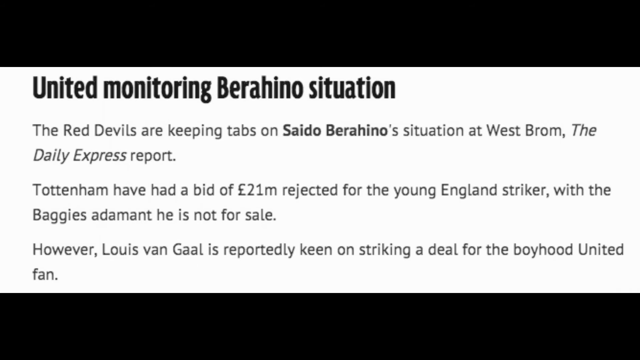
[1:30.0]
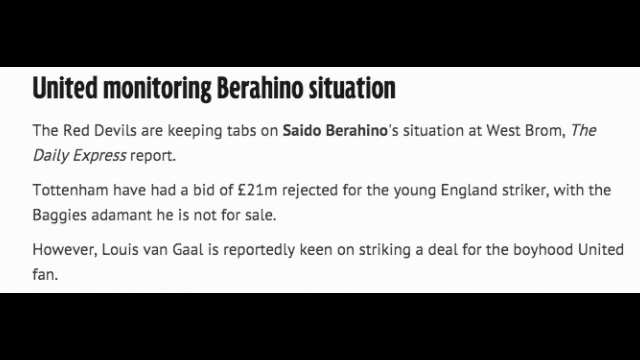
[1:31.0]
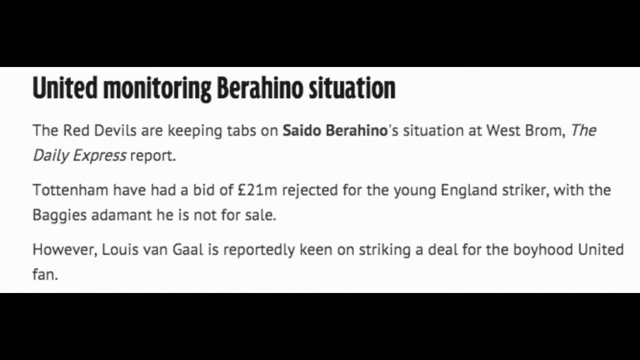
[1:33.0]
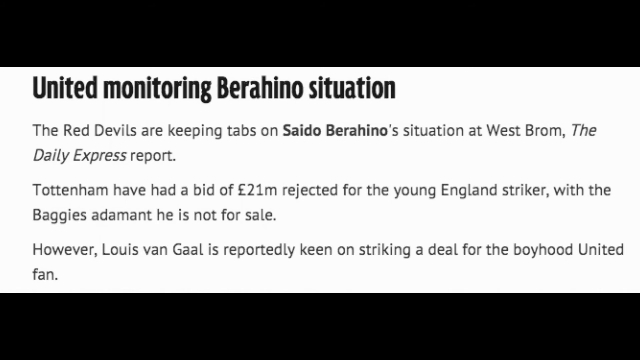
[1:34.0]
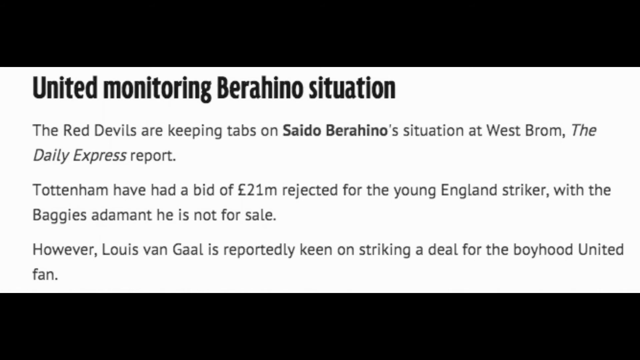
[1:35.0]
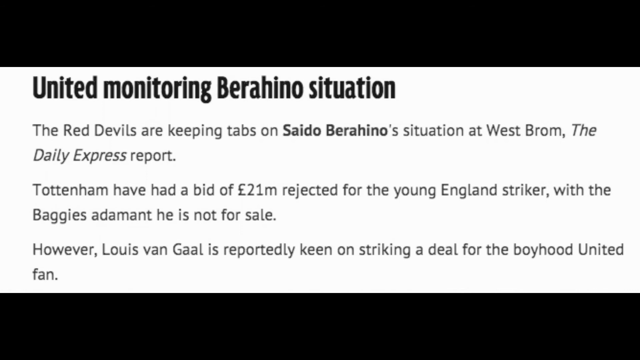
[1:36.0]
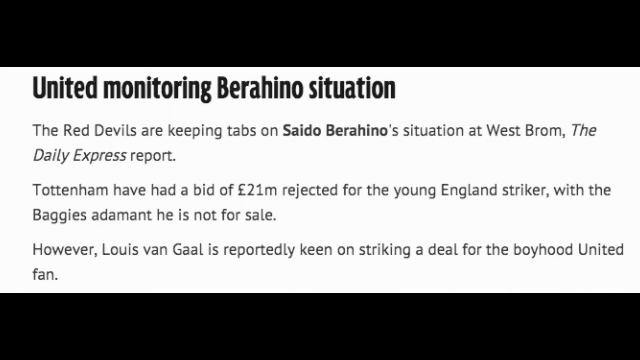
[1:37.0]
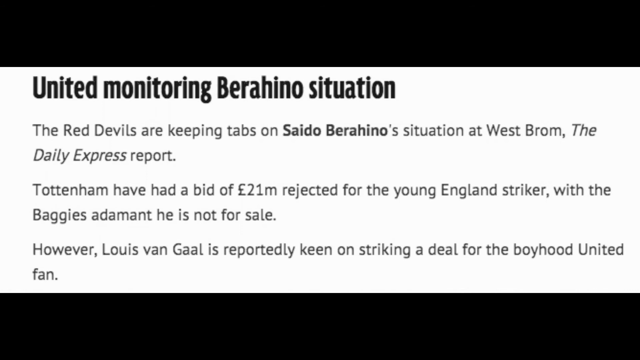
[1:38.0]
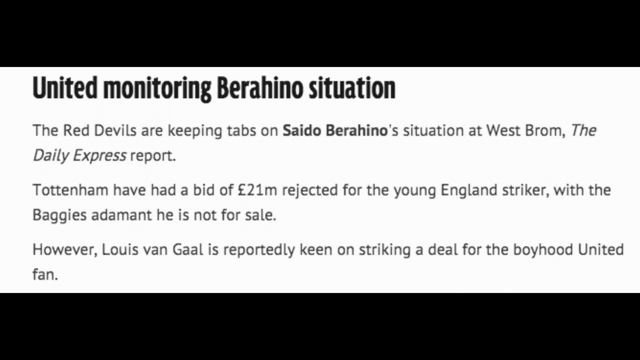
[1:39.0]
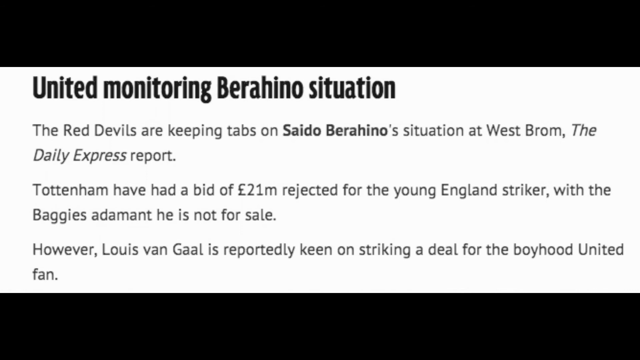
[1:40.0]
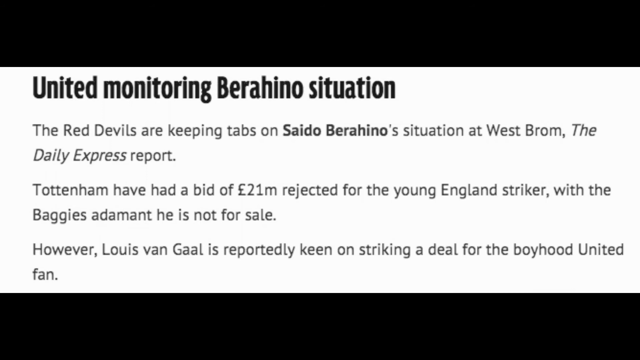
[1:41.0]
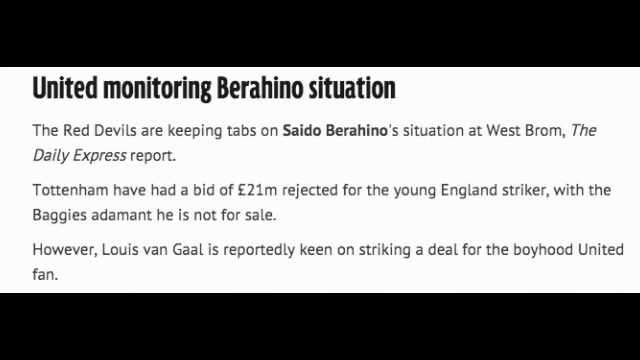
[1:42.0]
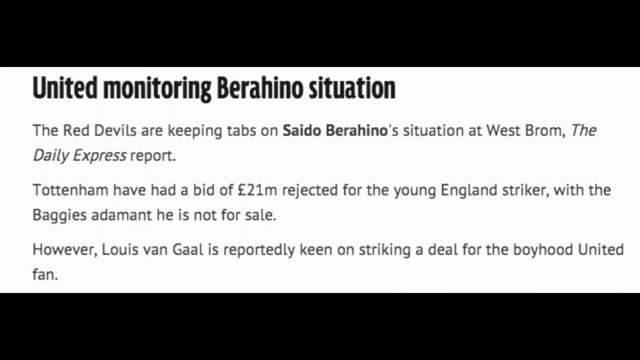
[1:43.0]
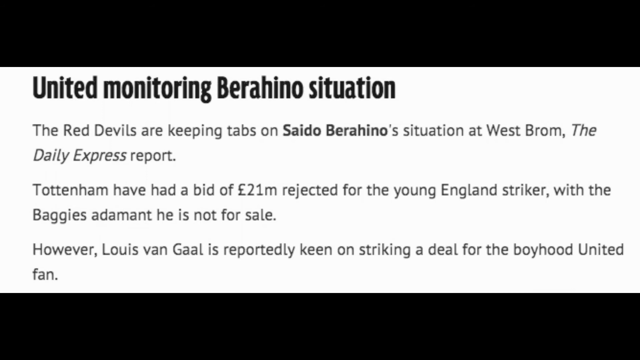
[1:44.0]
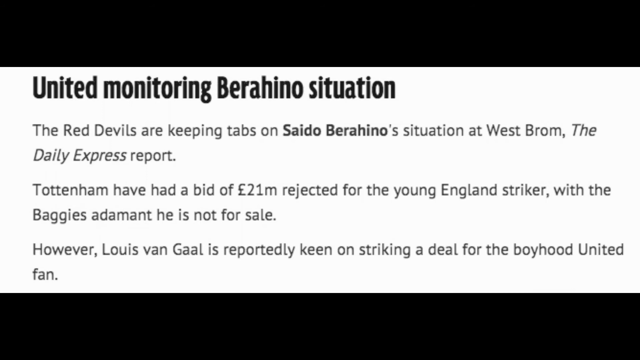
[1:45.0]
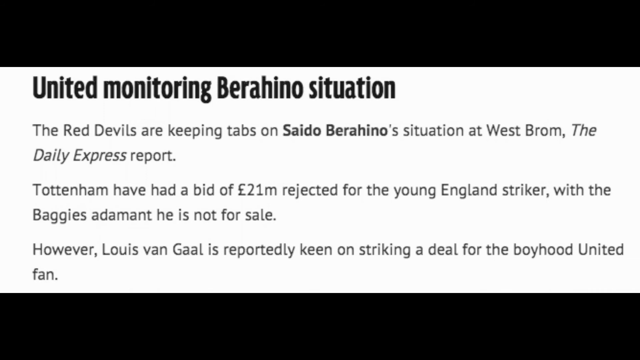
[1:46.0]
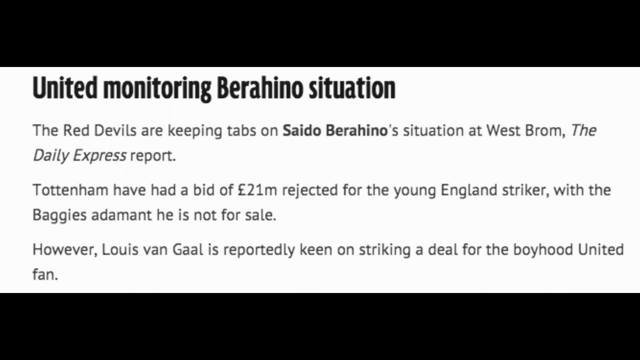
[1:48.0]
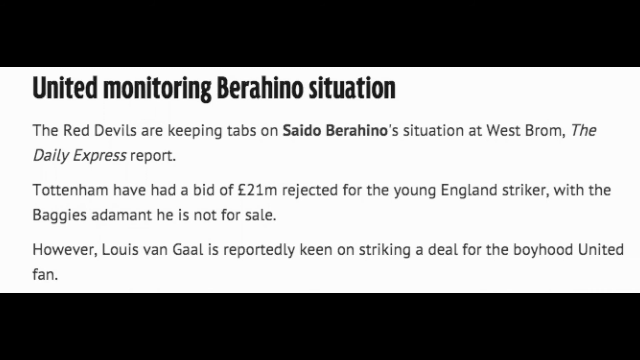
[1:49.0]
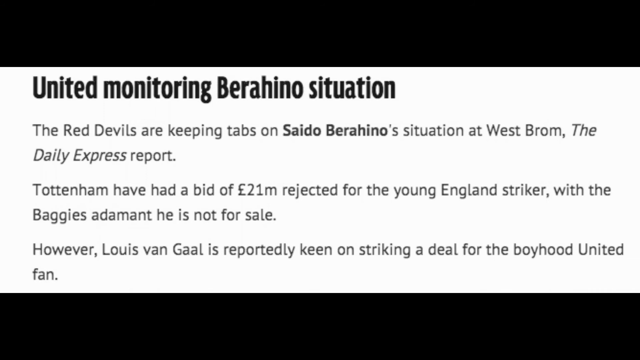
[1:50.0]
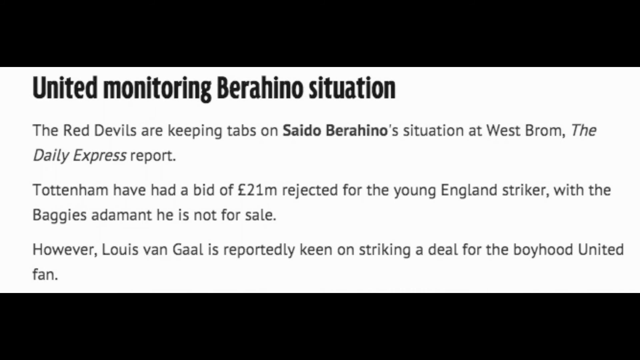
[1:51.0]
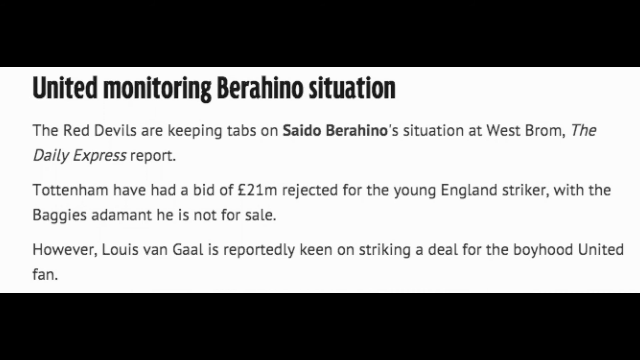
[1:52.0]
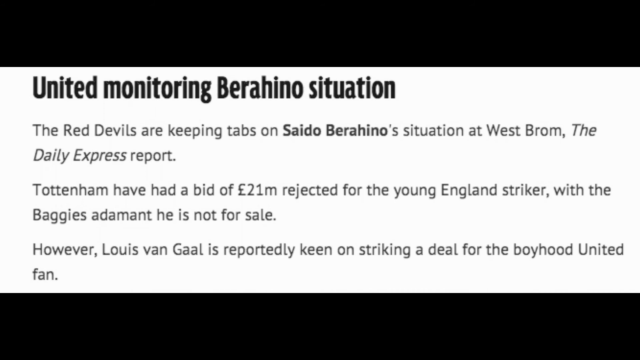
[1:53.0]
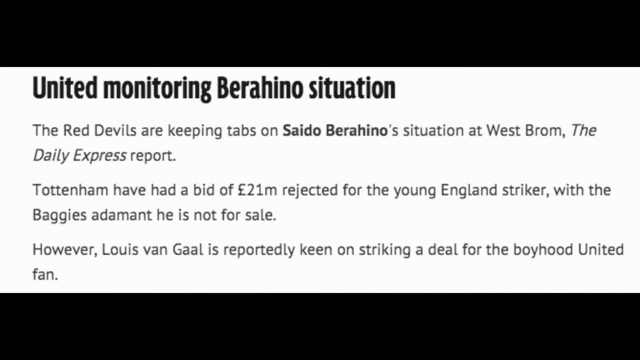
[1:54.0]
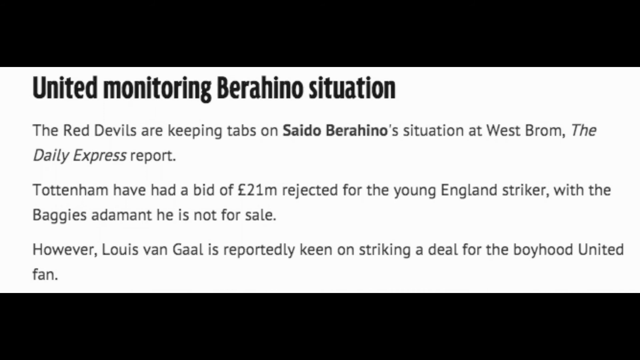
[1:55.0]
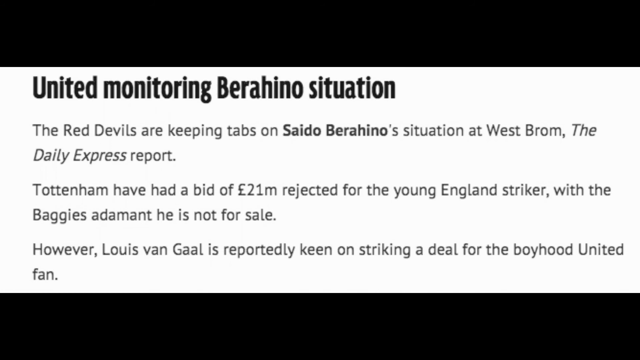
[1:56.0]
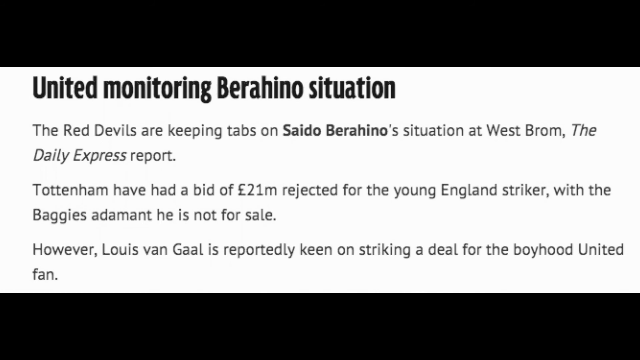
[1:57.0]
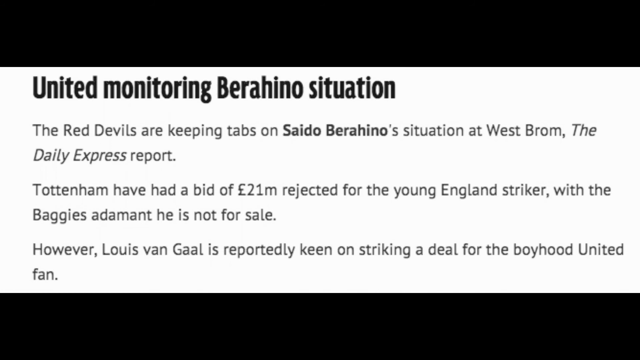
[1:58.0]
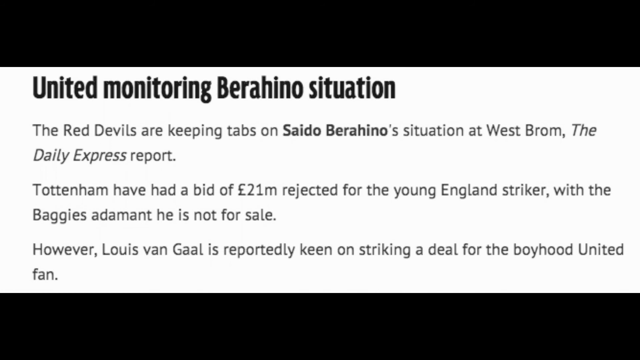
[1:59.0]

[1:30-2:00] A segment of an article, a series of sentences in black lettering, sits at the center of the screen in front of a white background, with black bars at the top and bottom; it is a very compressed cutout of an article showing just a few sentences. At the top left, a bold title reads "United Monitoring Barrachino Situation." The first sentence reads "The Red Devils are keeping tabs on Saito Barrachino's situation at West Brom, the Daily Express Report," with "Saito Barrachino" in bold. The next reads "Totenham have had a bid of 21 million pounds rejected for the young England striker. With the baggies adamant, he is not for sale." The third reads "However, Louis van Gaal is reportedly keen on striking a deal for the boyhood United fan." Nothing on screen moves, and the scene does not transition to any other page.